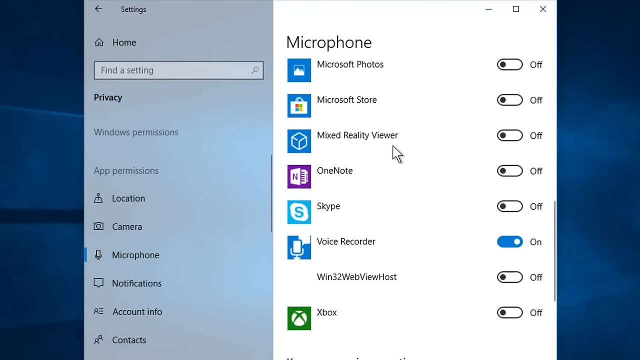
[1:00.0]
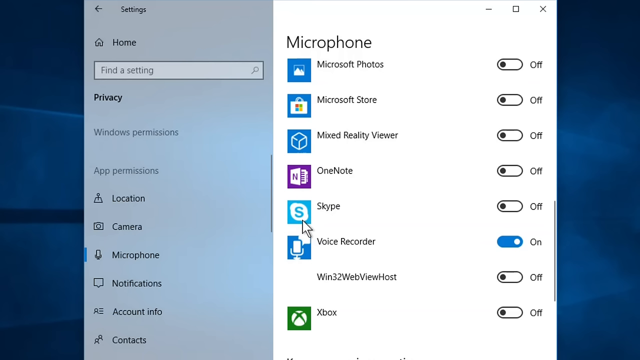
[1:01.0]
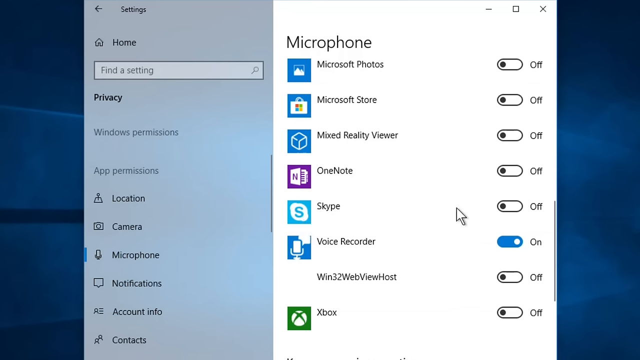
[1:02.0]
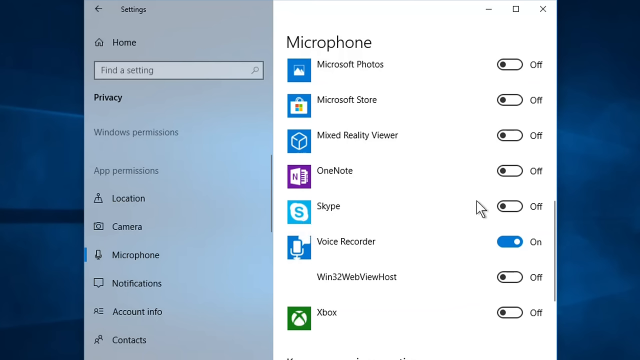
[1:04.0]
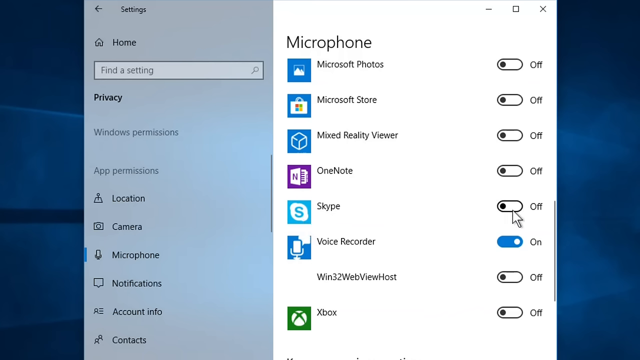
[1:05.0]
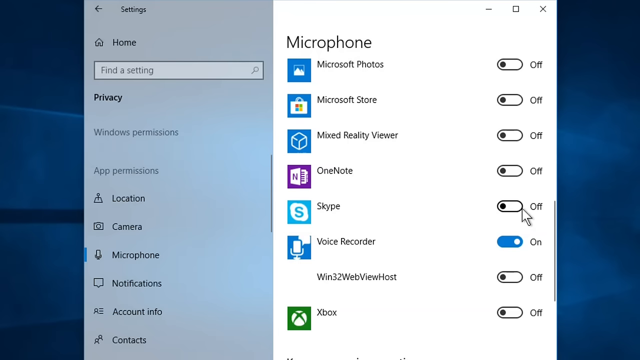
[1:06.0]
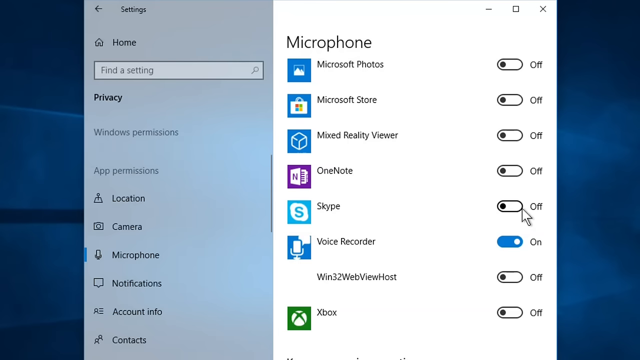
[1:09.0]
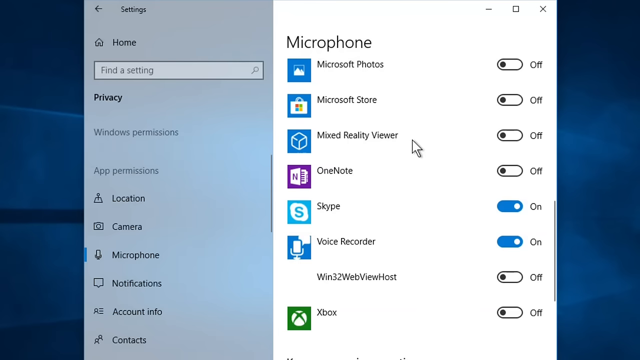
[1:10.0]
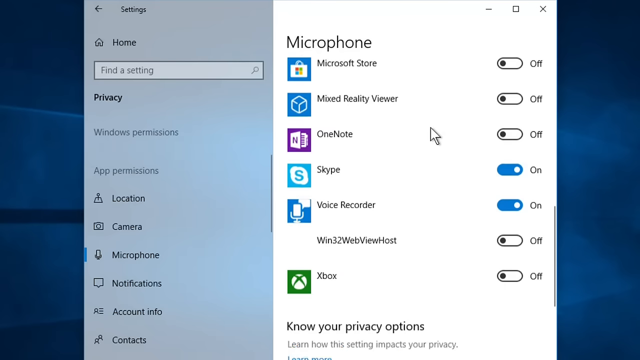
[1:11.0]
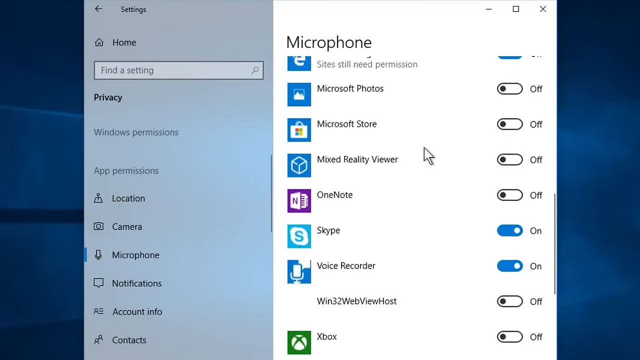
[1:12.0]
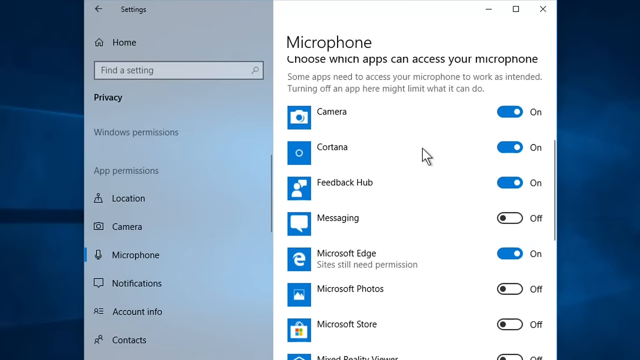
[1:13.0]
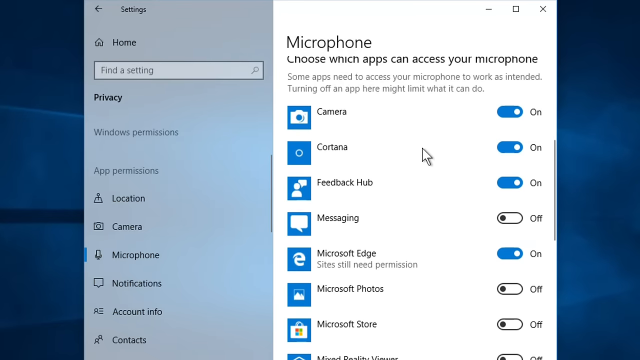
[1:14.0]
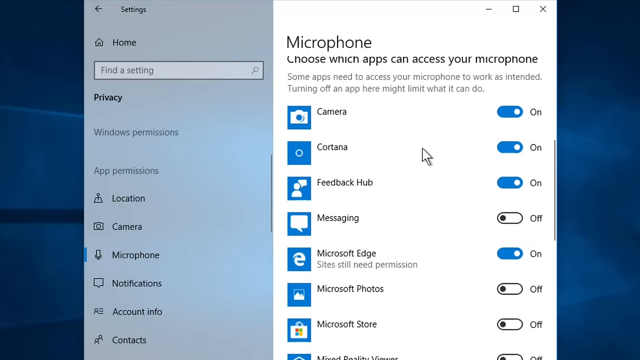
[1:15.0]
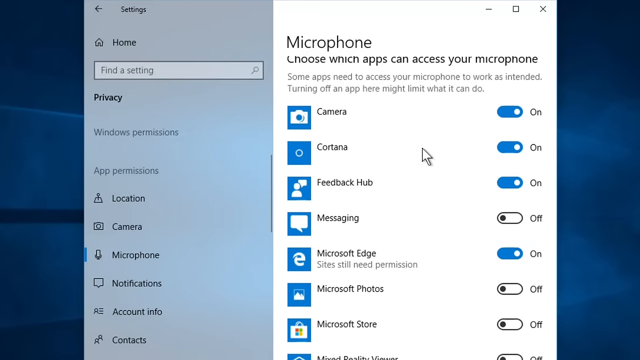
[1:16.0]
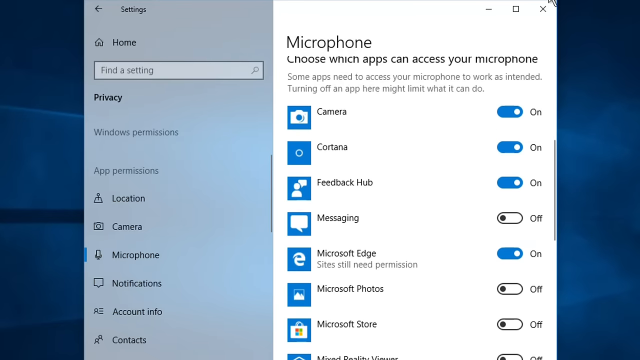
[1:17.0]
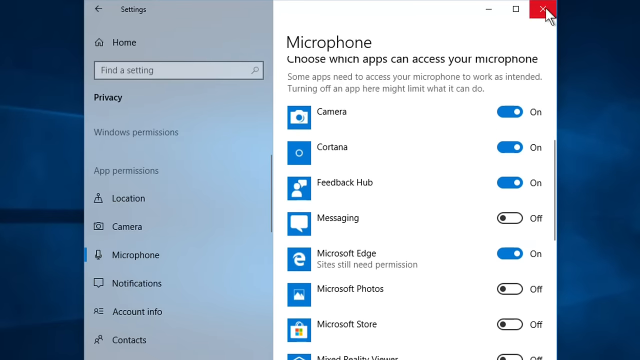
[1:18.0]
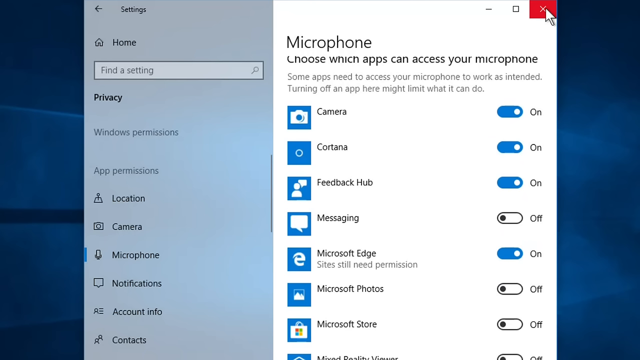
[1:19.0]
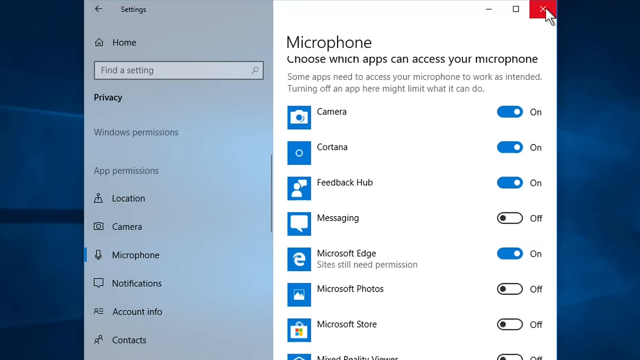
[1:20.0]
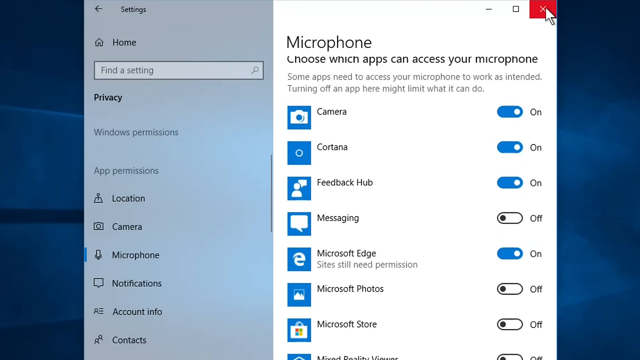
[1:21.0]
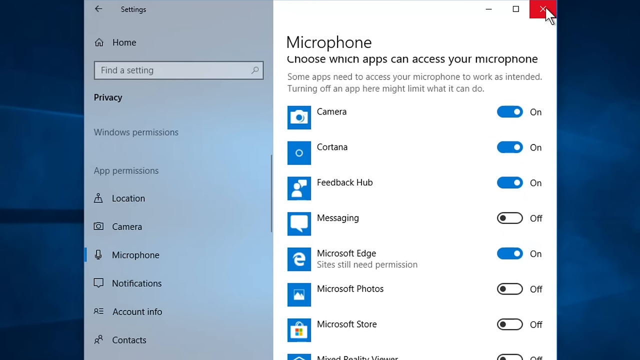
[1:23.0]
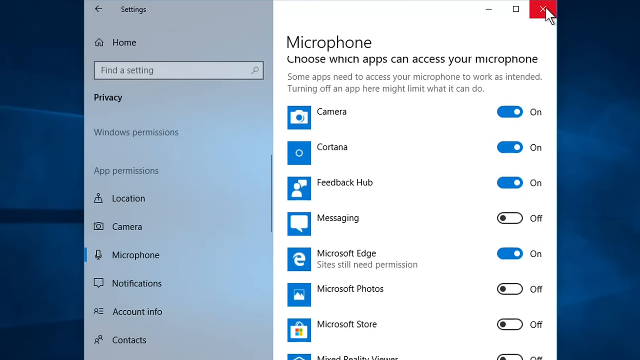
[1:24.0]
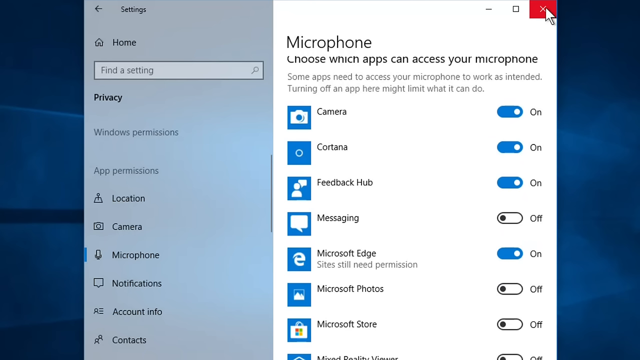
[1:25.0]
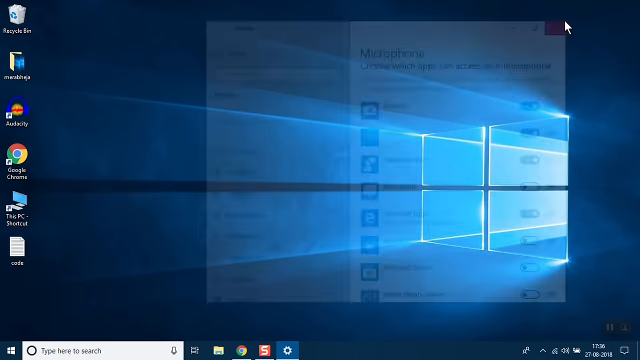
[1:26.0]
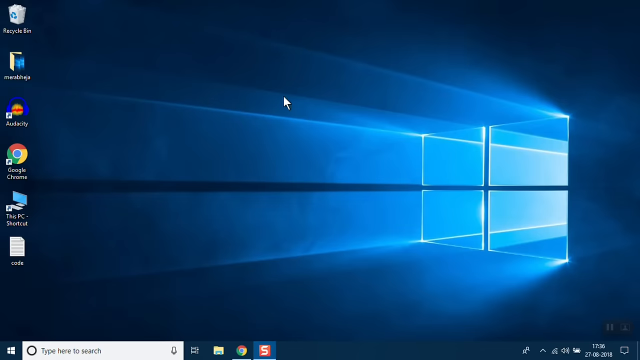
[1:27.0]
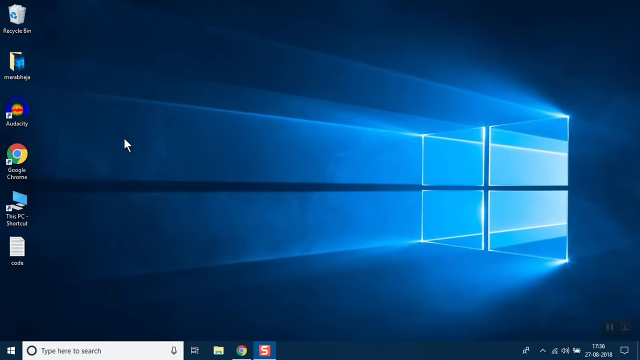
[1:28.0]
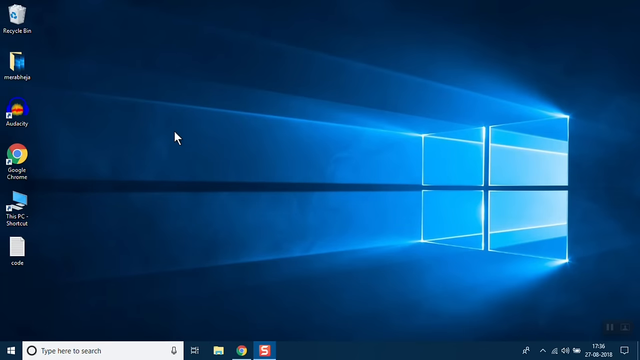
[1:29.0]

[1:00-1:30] The cursor pauses near the Skype icon, then moves slowly to the right near its on/off button and hovers without clicking. Skype is in the off position: a black oval filled with white, with a black circle dot on the left. The cursor then clicks it, and Skype is now on: the button inside has moved to the right and is white against a filled-in medium blue oval. The cursor scrolls up, then down quickly, going back and forth a bit in the section, before moving to the upper right corner. There, an X that starts as a black X on a white background turns into a red box with a white X in the middle, apparently as it is clicked to close the window. The cursor hovers on it for a few seconds, then the window closes; the entire white box in the middle disappears, returning to the original, mostly empty computer screen with the column of six icons on the left.